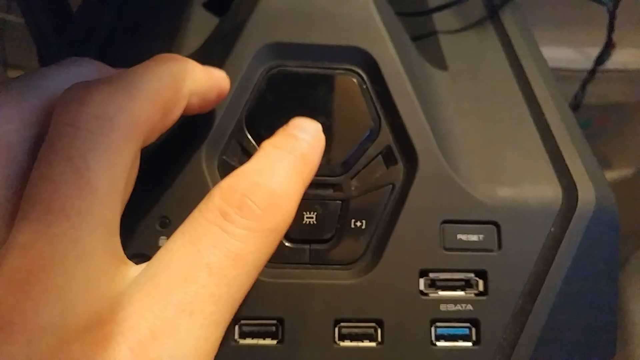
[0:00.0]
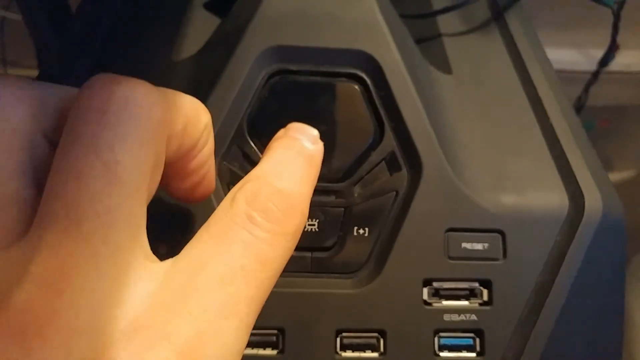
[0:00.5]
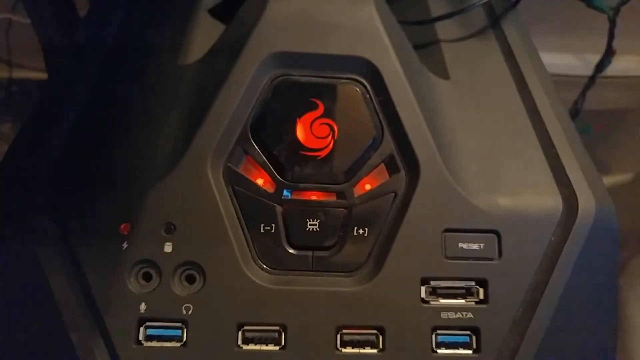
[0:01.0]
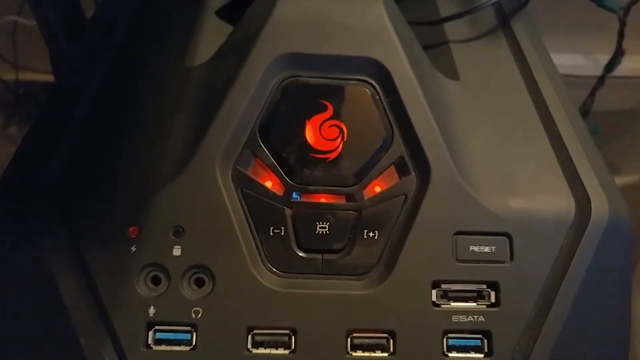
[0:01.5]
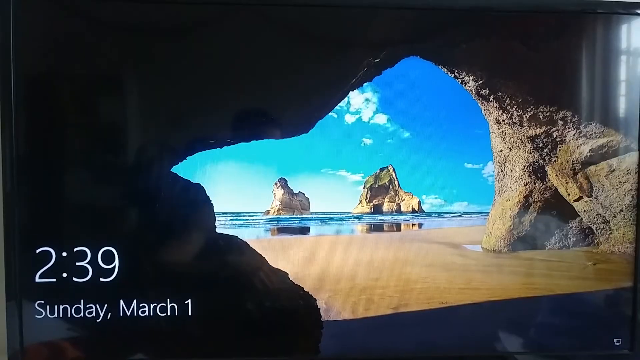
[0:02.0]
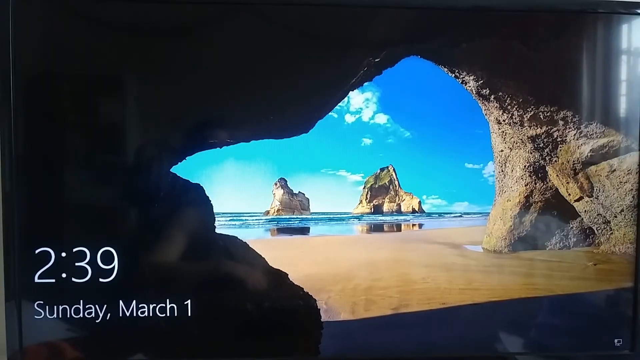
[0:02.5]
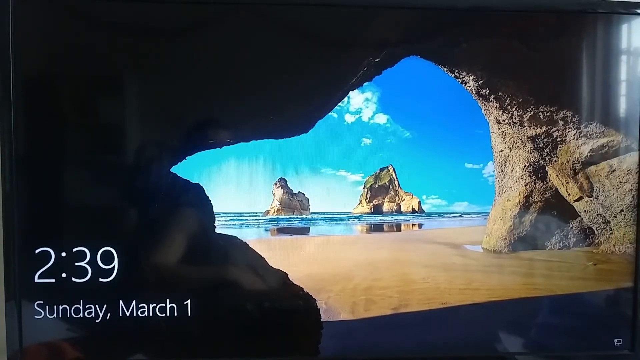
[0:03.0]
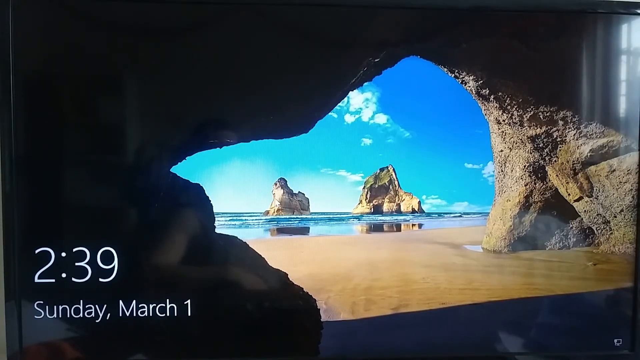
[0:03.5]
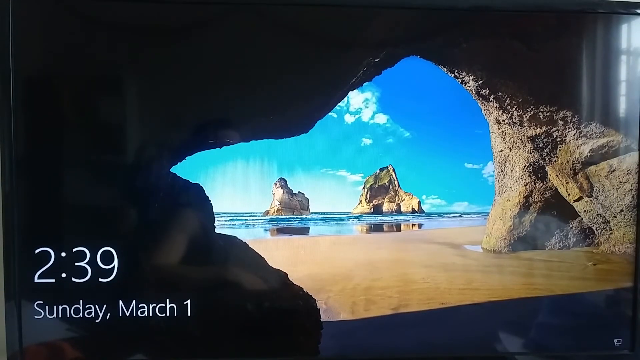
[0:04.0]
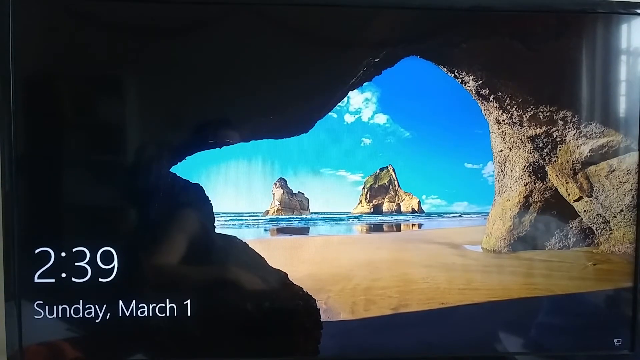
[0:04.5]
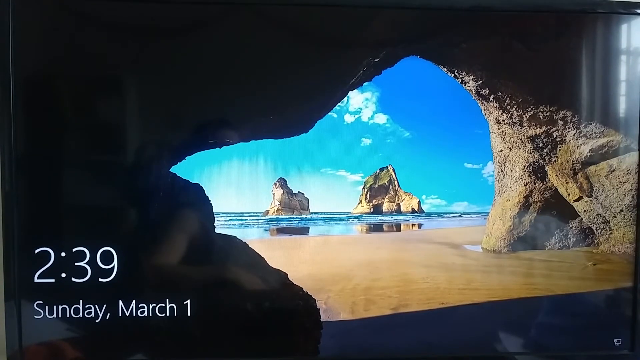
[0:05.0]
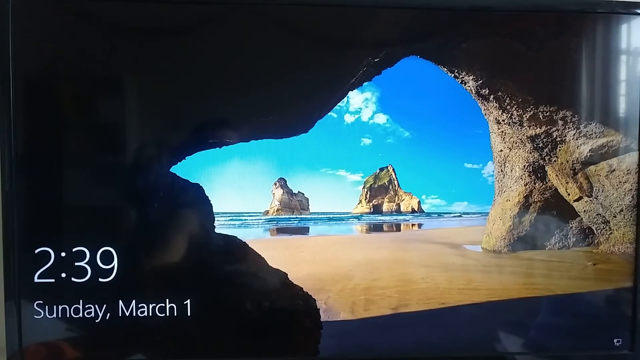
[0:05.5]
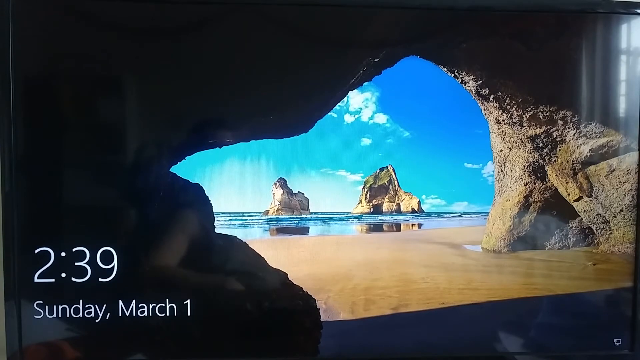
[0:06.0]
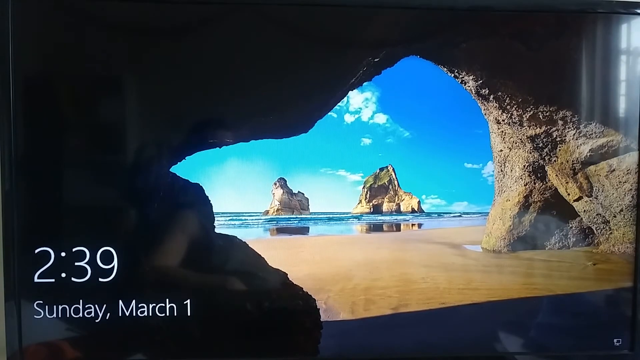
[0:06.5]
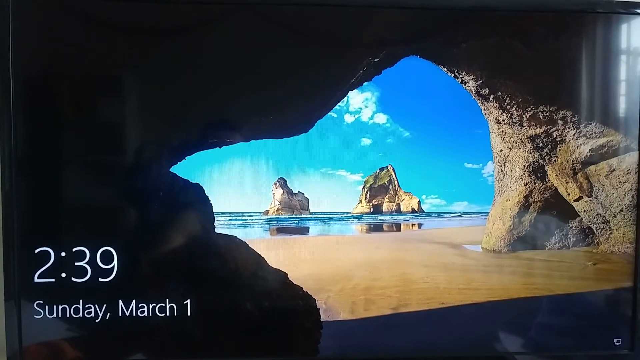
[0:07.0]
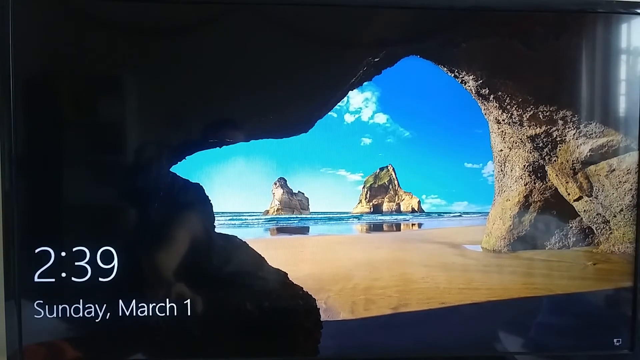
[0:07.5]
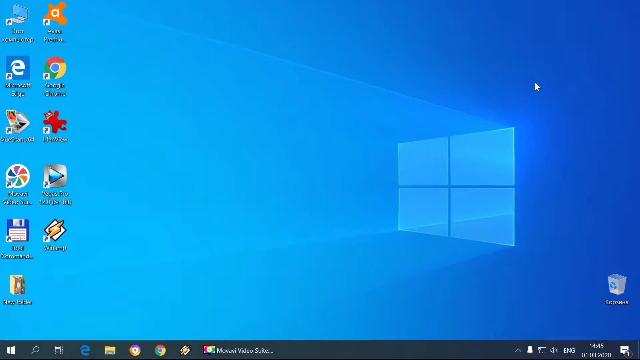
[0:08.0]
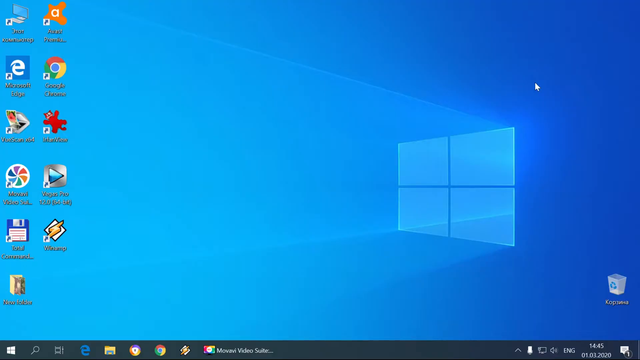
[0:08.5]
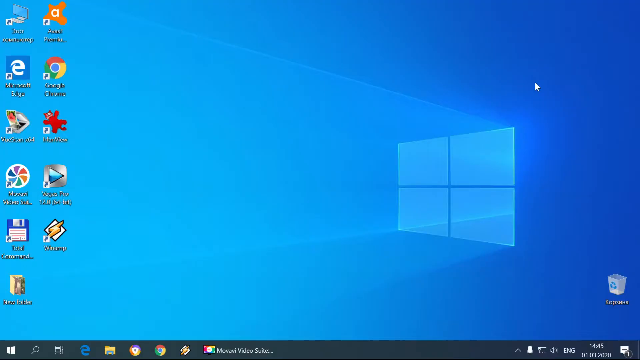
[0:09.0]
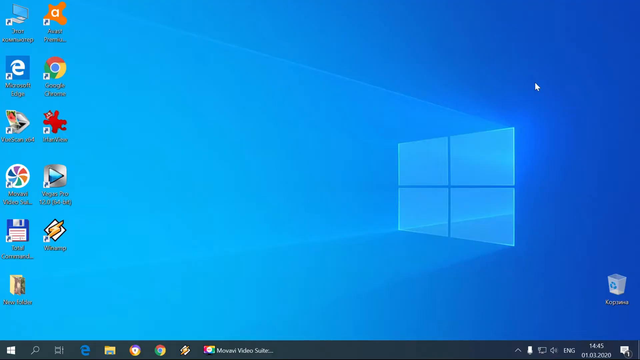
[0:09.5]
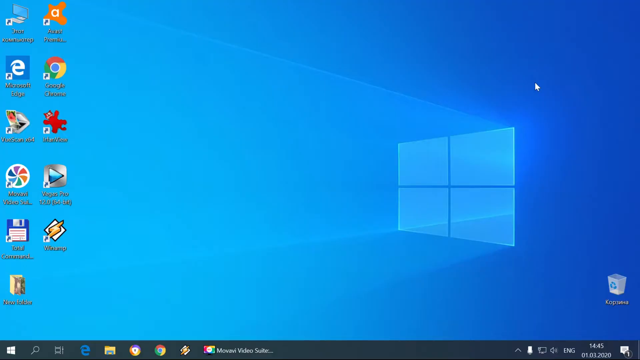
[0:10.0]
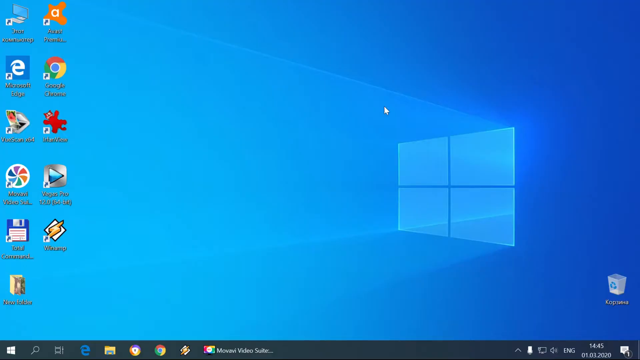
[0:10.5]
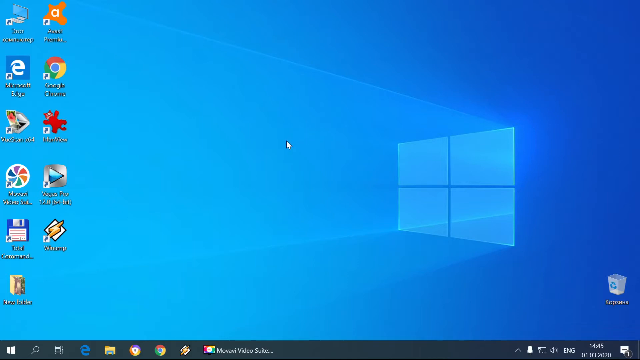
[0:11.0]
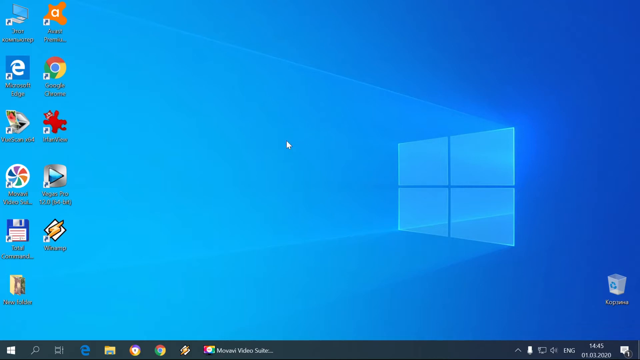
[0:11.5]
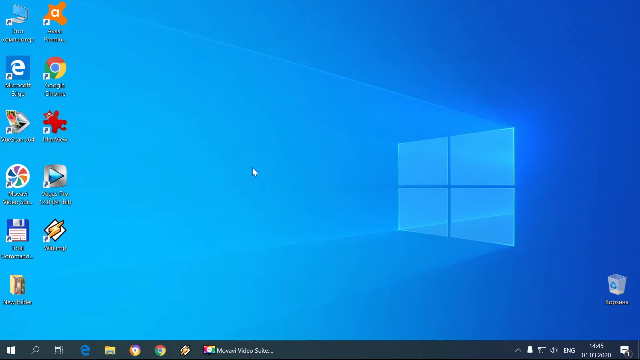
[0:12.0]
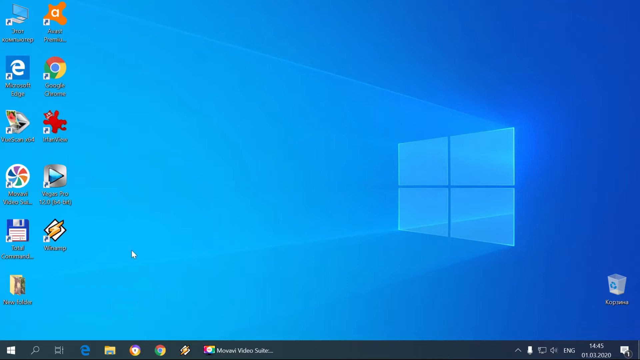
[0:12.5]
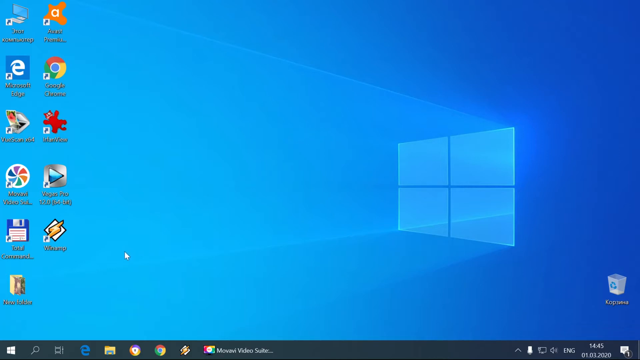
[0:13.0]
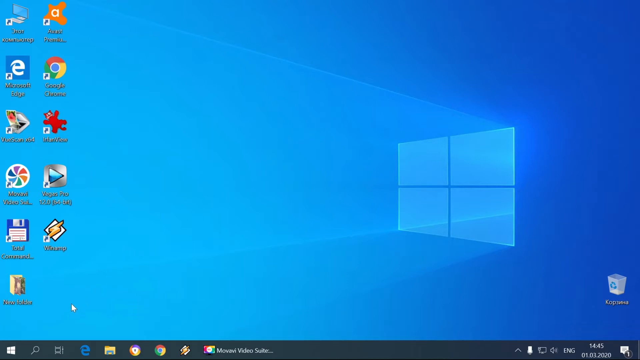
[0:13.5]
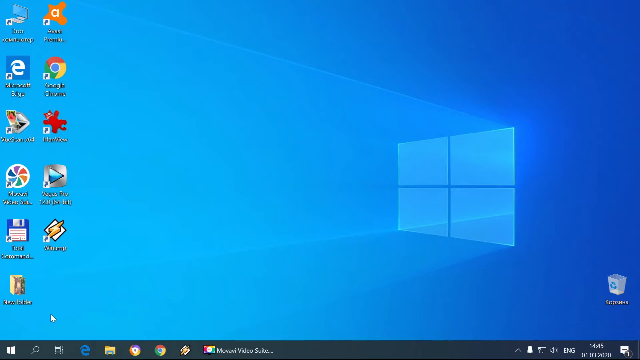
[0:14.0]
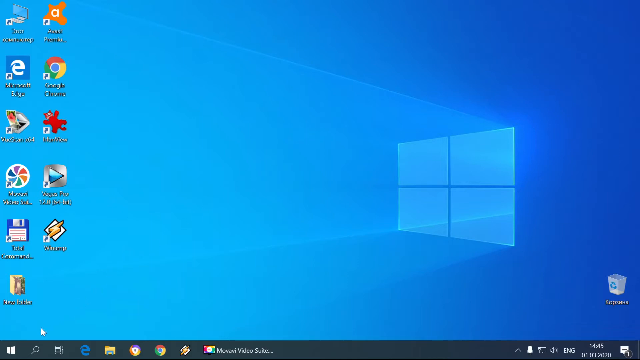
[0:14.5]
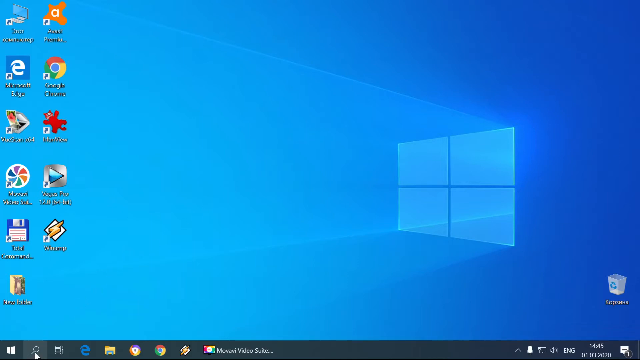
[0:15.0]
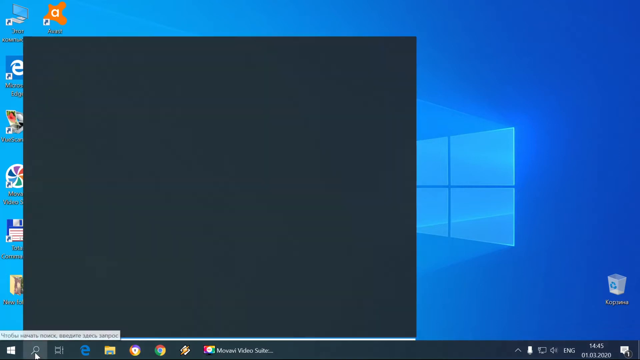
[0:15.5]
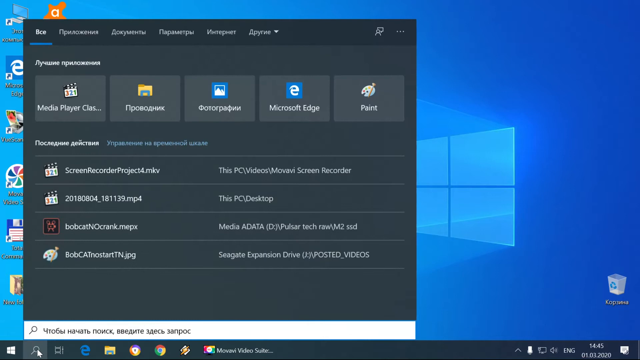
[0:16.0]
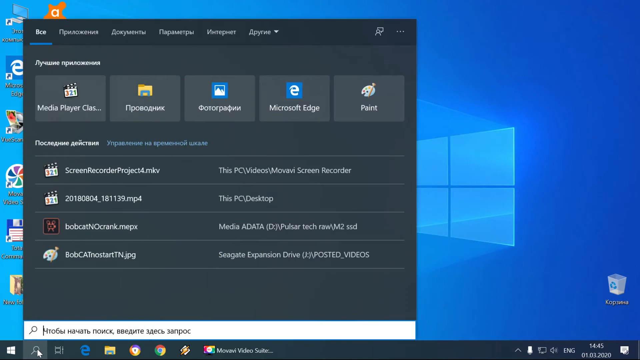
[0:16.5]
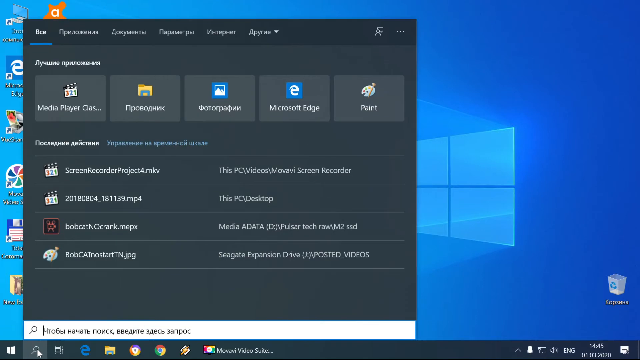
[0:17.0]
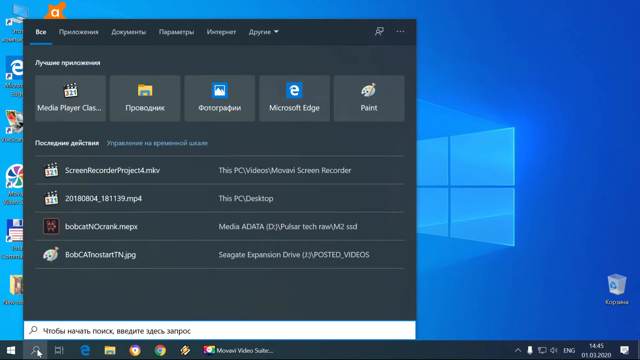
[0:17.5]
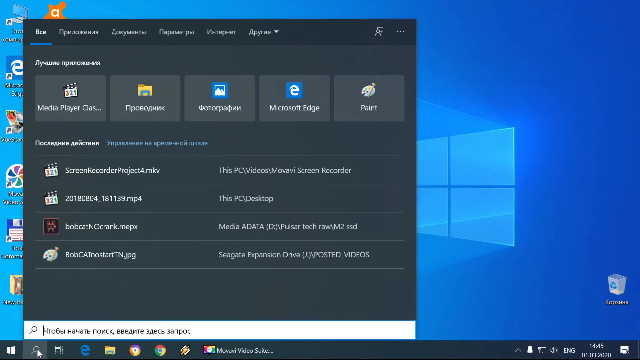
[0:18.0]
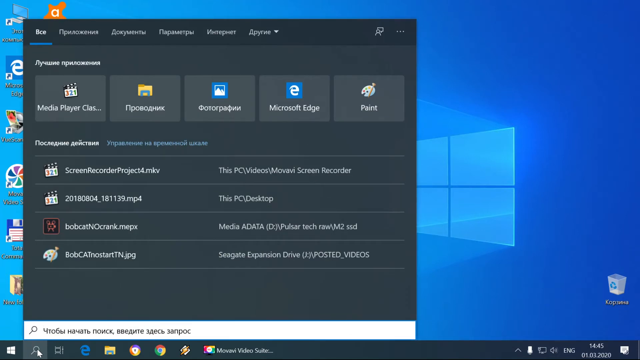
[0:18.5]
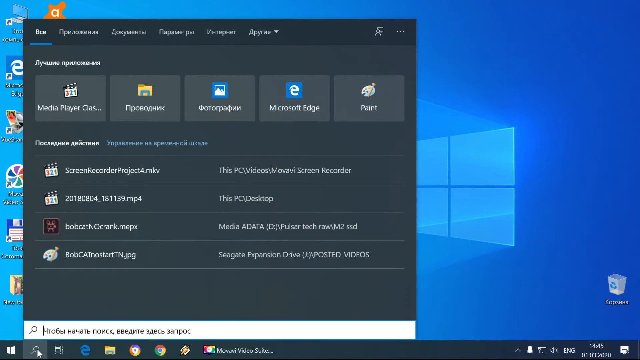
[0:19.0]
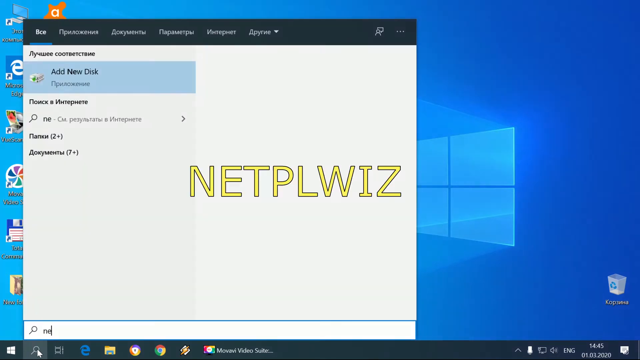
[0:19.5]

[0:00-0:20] Indoors, a person turns on a black electronic device with a hexagonal-like shape; when its button is pressed, it turns red. A Windows screen appears showing the time 2:39 and the date Sunday March 1. Its background is a cave interior looking out onto an ocean or lake, with two giant islands across from each other. A person is visible in the reflection of the computer screen, and then the screen starts up to a Windows background: a blue window and a medium light at a slight angle, with 11 applications on the left part of the screen. The cursor moves from the right across the top to the bottom, clicks on a search tab at the bottom, and a window pops up showing something that says "netplwiz".